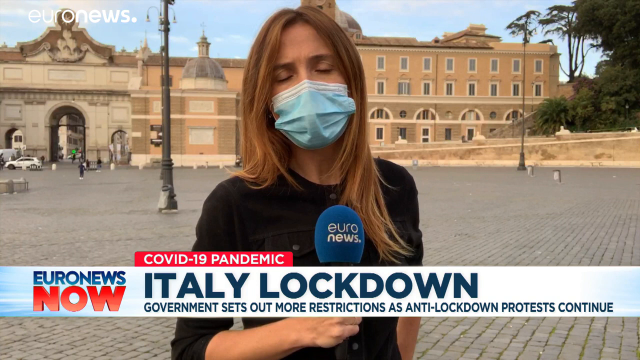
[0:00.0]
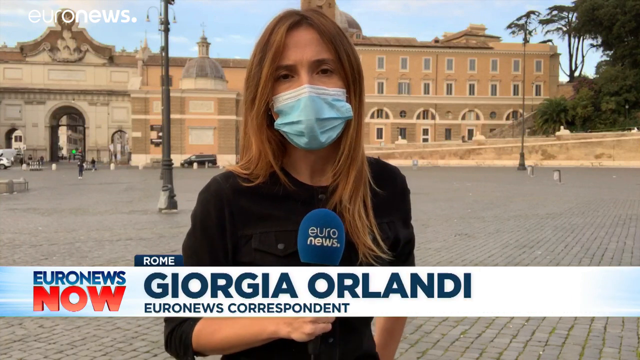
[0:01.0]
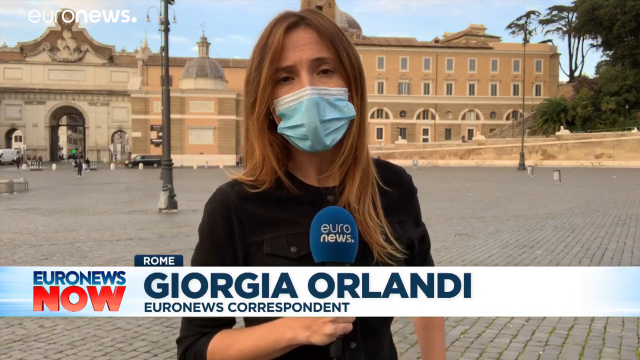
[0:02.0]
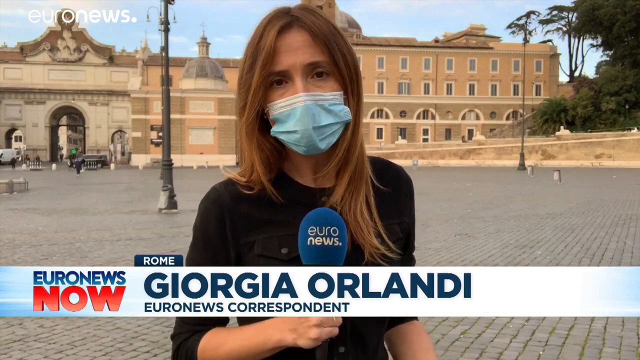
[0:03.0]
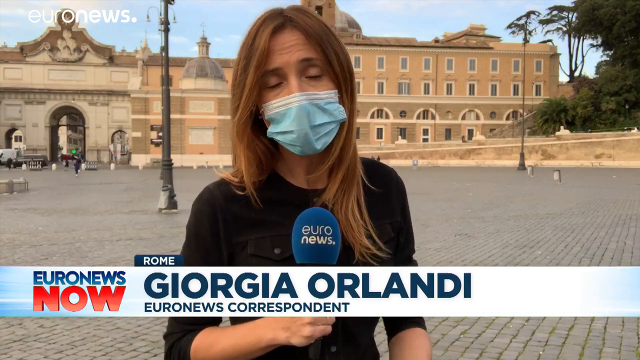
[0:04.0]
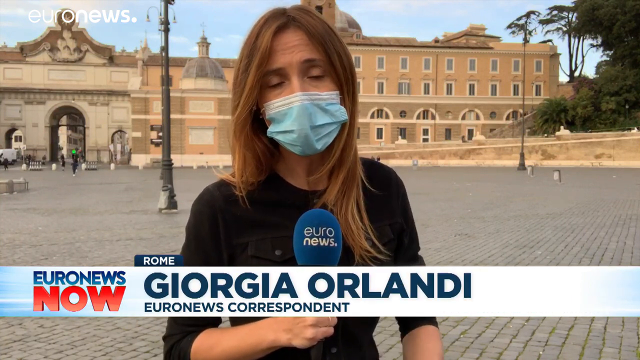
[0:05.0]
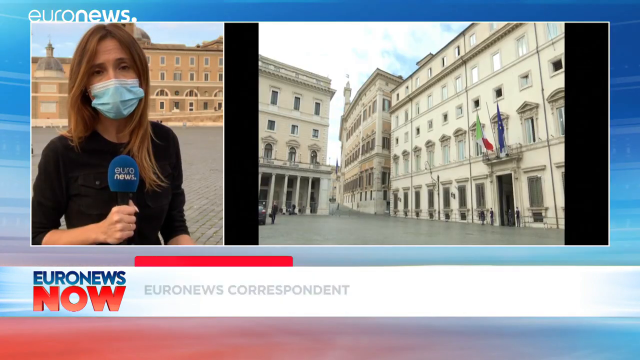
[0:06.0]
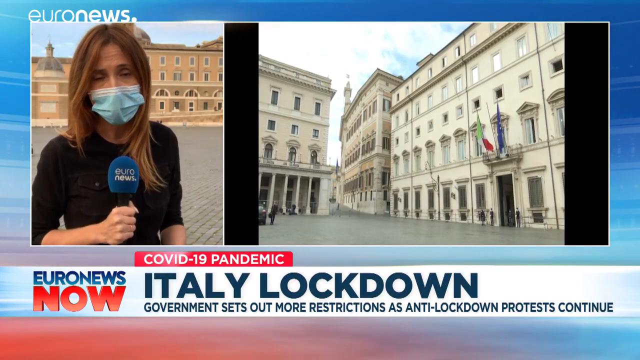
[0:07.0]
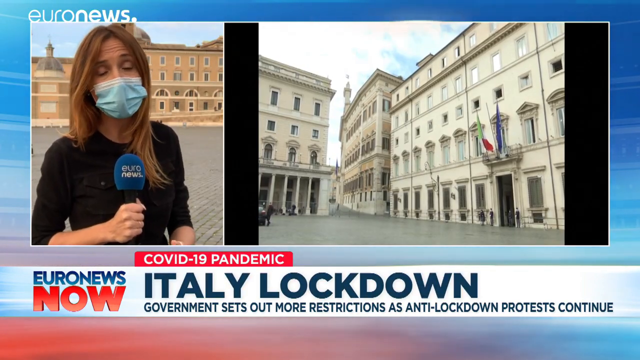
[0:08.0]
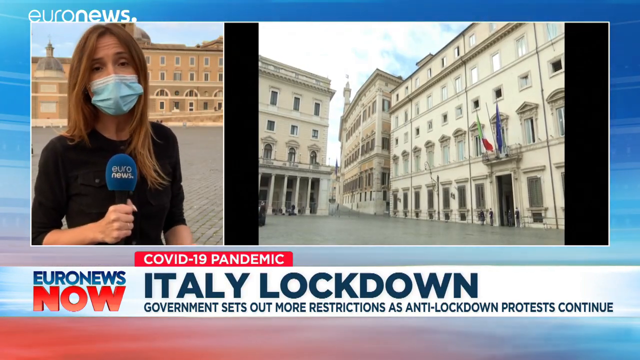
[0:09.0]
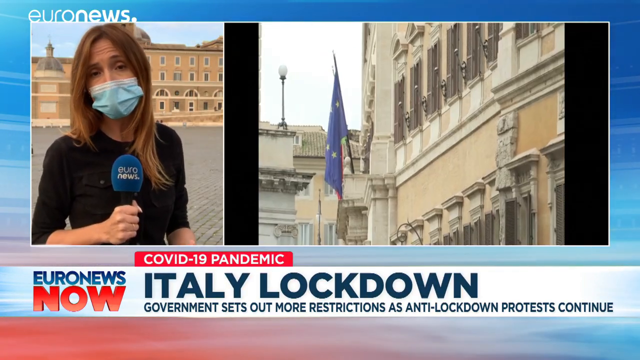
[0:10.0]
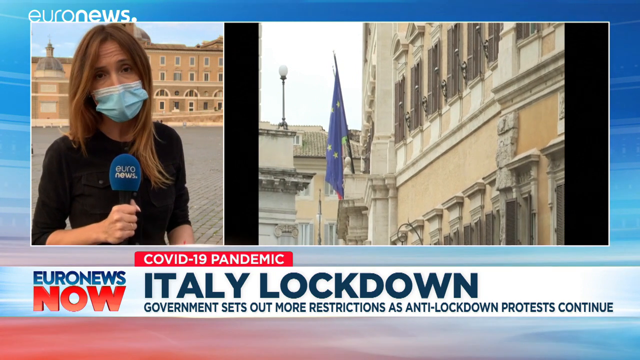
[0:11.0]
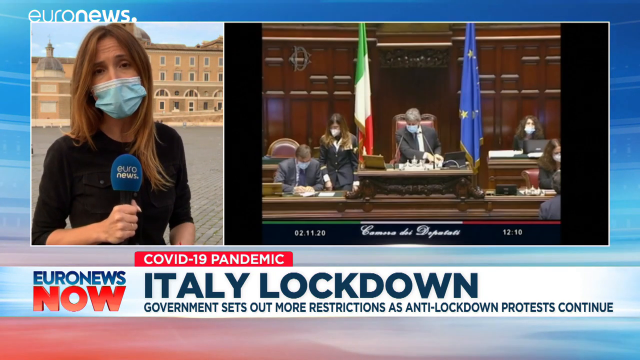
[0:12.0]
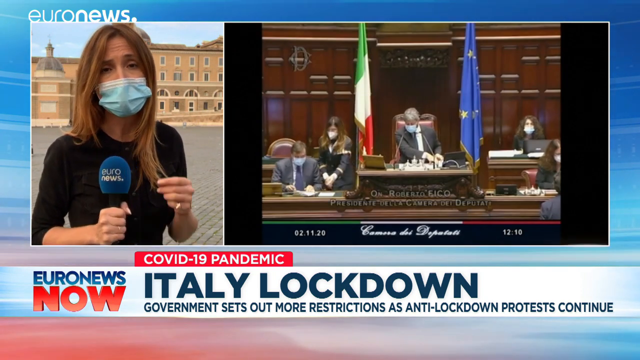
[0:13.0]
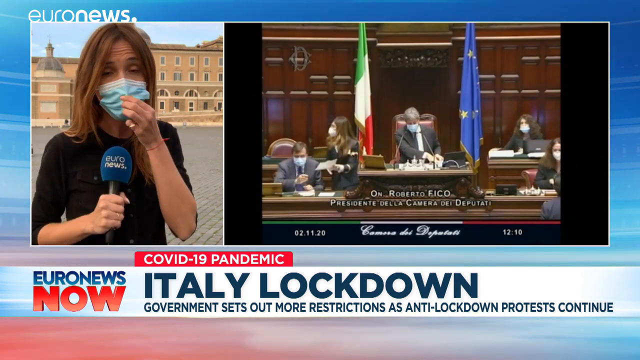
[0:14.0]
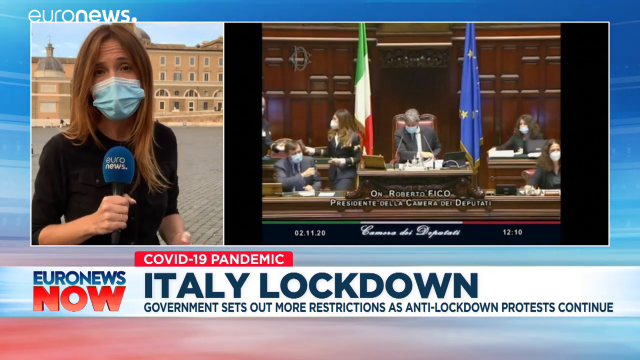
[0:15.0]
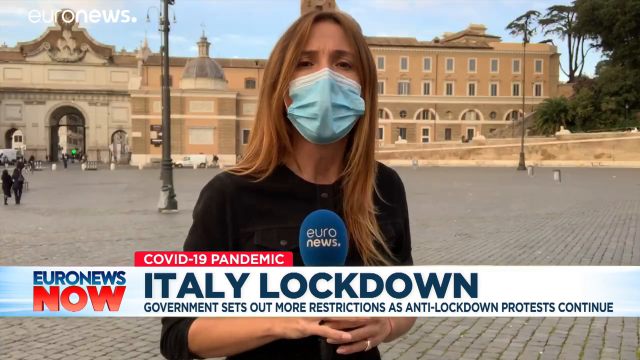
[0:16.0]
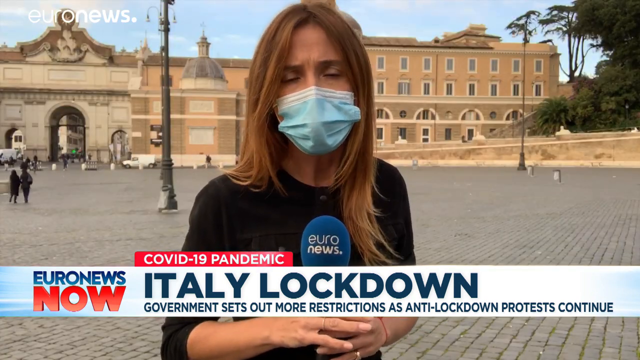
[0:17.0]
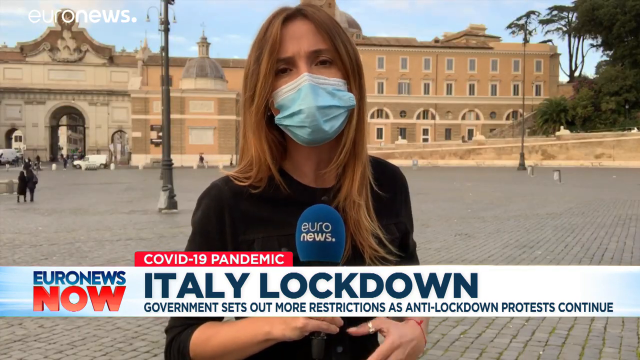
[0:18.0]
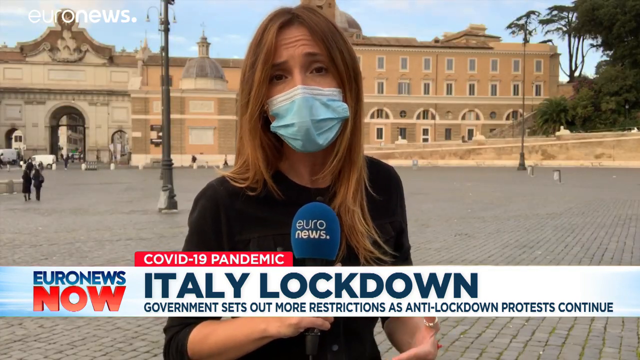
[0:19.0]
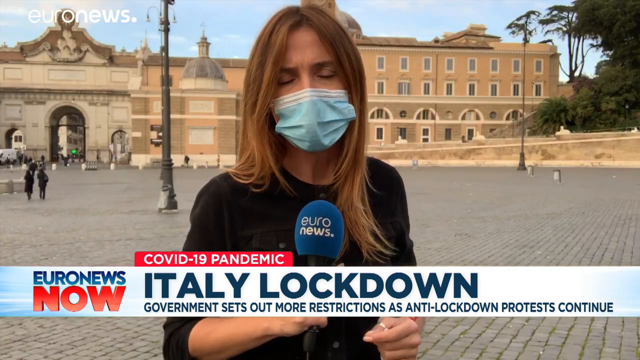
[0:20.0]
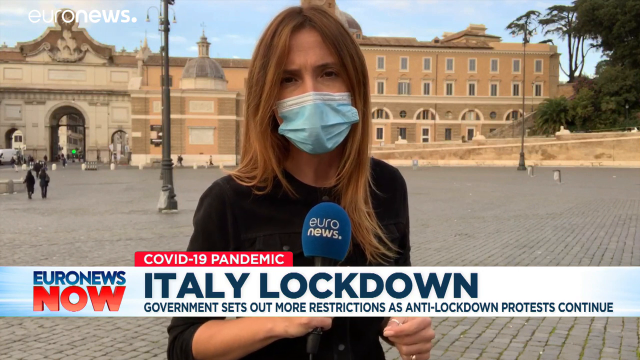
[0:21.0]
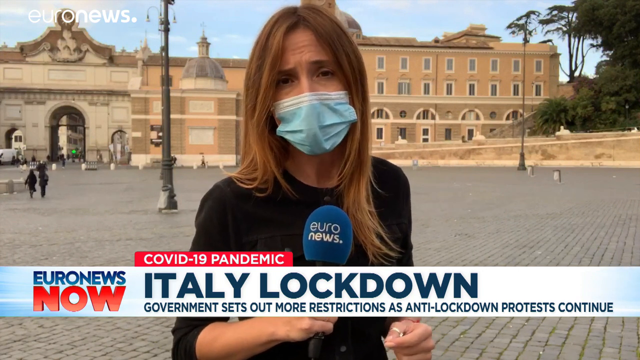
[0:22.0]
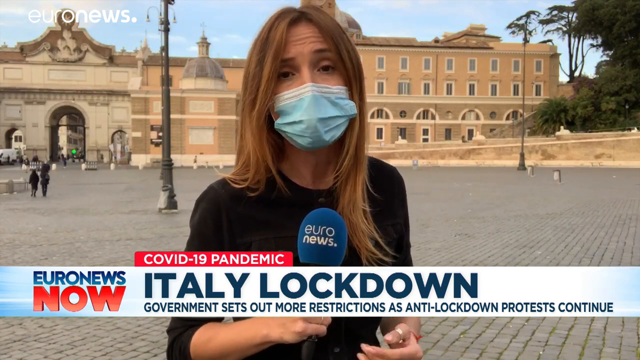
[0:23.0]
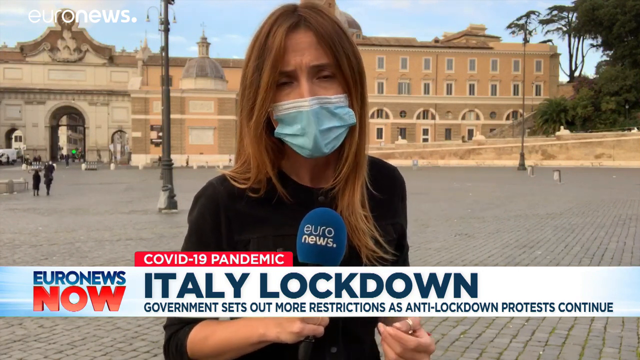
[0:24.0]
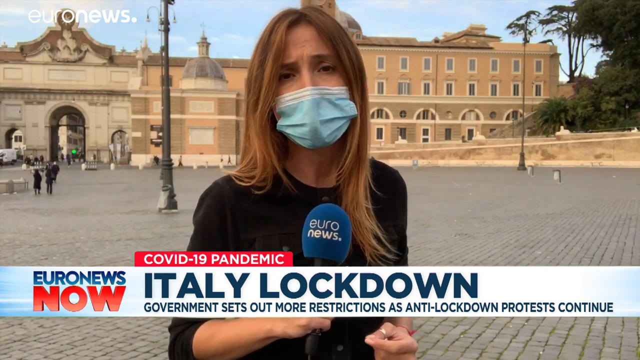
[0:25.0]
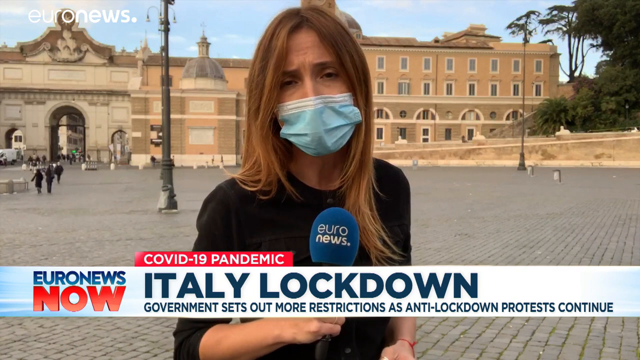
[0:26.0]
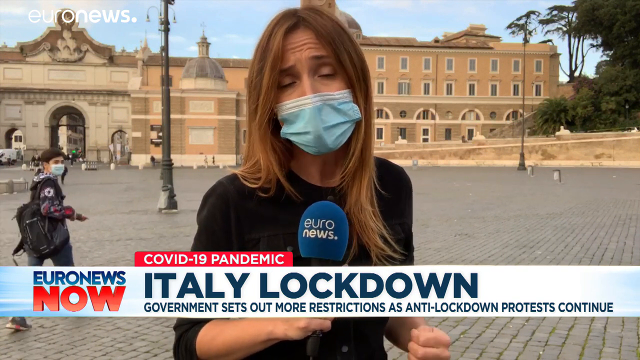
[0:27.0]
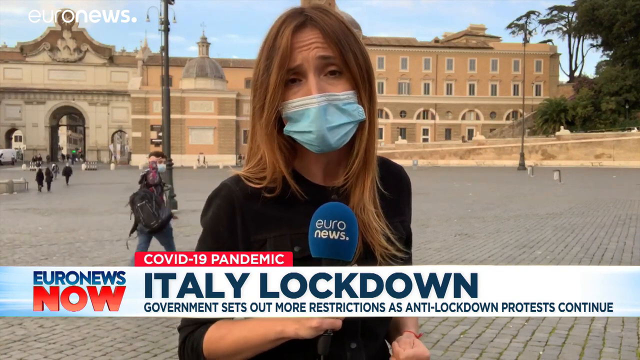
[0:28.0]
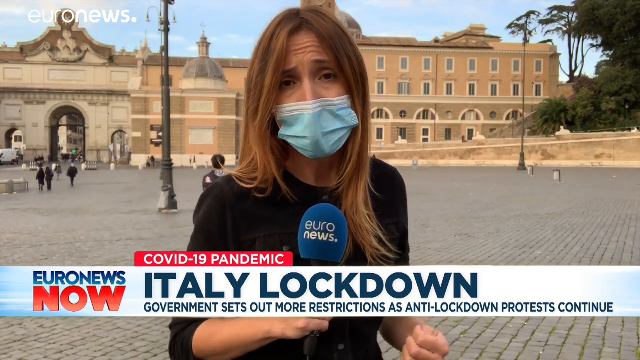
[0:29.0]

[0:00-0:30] A woman with long brown and blondish hair past her shoulders, wearing a blue mask, is outside somewhere in a different country. In the top left corner the screen says "Euronews". At the bottom there is a white and blue bar that says "Euronews now", an orange bar with white text that says "COVID-19 pandemic", and blue text that says "Italy lockdown. Government sets out more restrictions as anti-lockdown protests continue." The woman holds a blue microphone that also says "Euronews". Her name, "Georgia Orlandi", pops up, identifying her as the Euronews correspondent, and a location pops up saying she is in Rome. She looks at the camera and talks. The video then transitions to a split screen: one side shows a view of Rome with some people walking around and a flag on the side of a building, and the other shows a person in what looks to be a court setting, sitting in a chair with two flags surrounding him, along with some other women standing who also wear masks. The video then returns to the masked woman talking into the microphone.